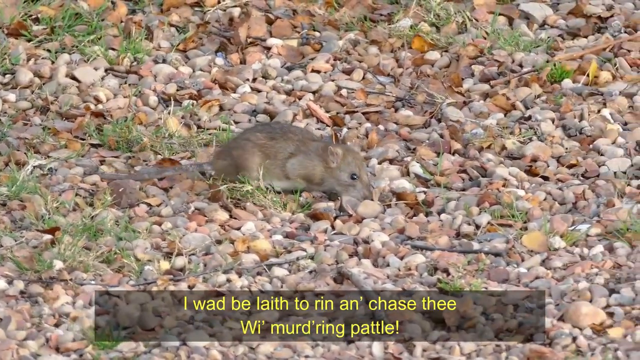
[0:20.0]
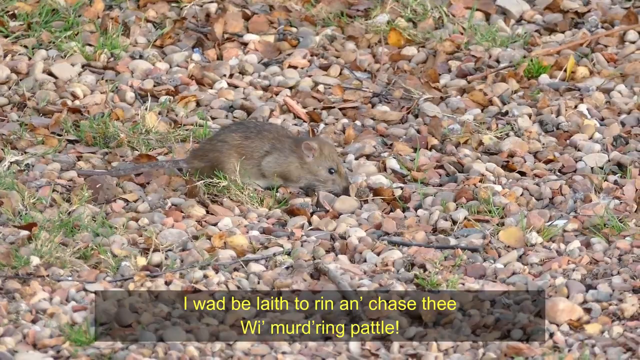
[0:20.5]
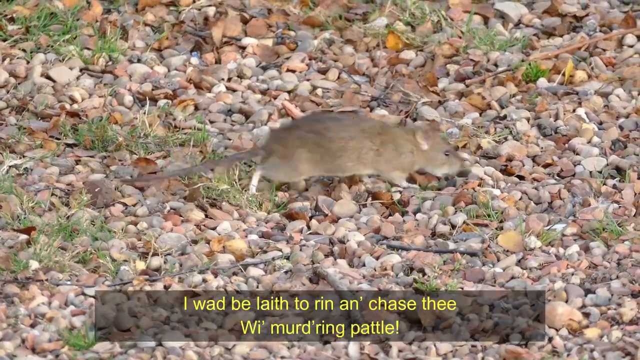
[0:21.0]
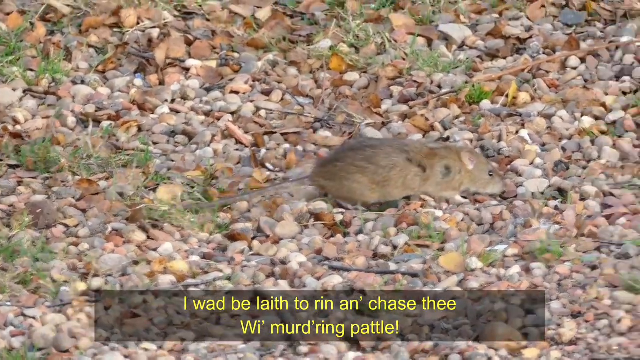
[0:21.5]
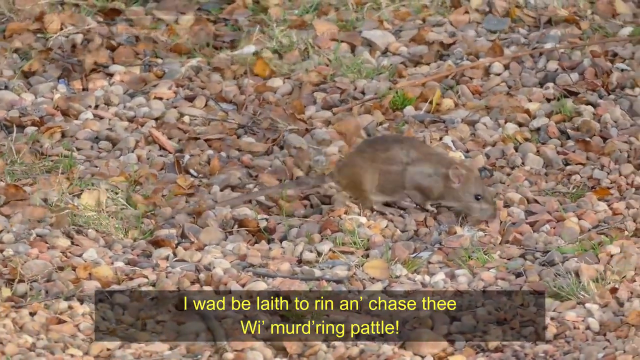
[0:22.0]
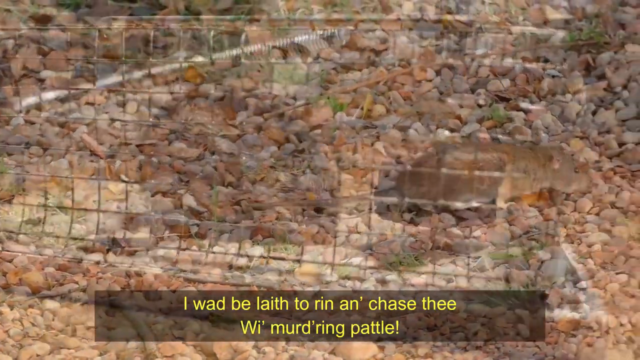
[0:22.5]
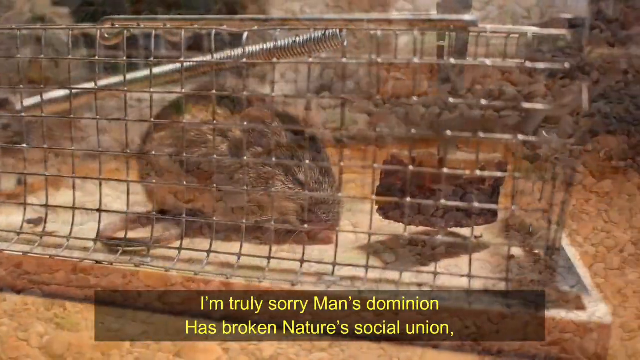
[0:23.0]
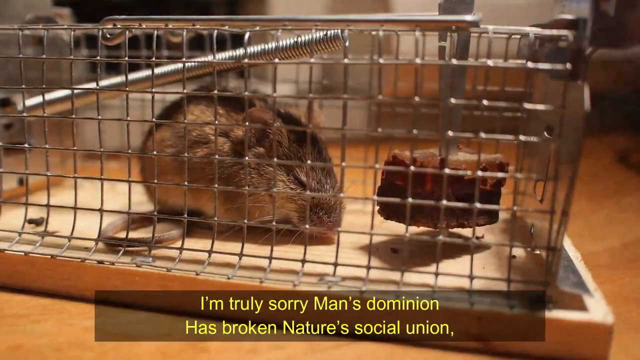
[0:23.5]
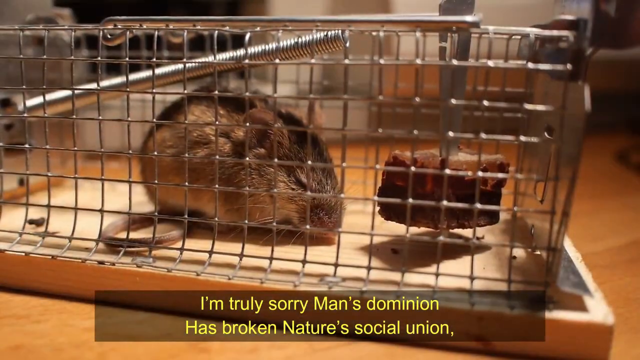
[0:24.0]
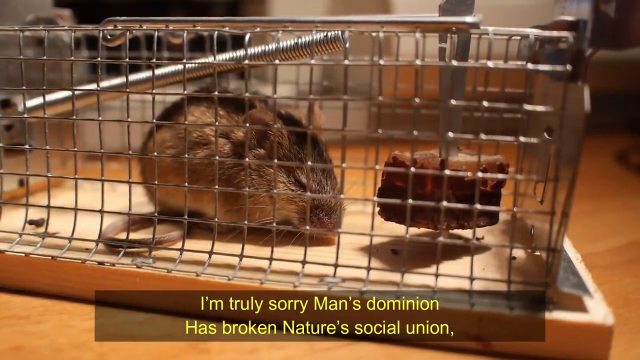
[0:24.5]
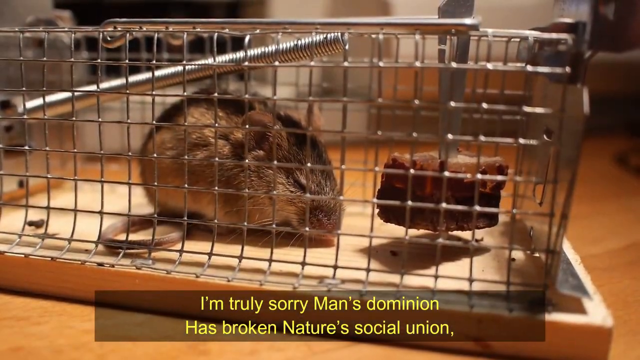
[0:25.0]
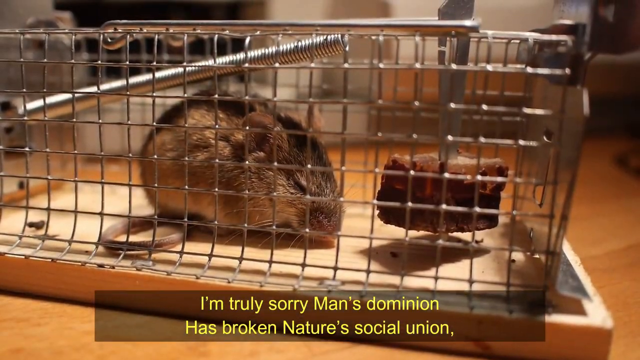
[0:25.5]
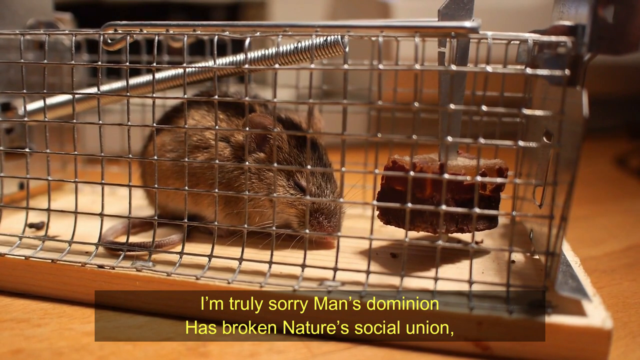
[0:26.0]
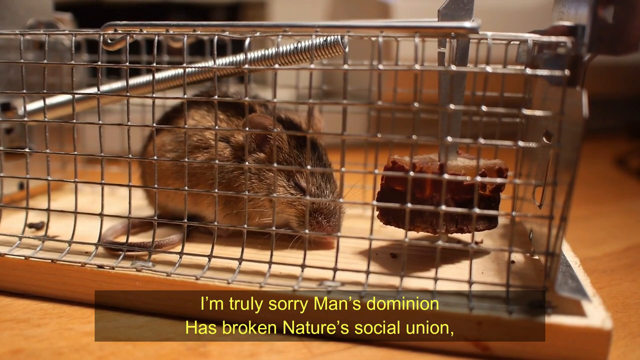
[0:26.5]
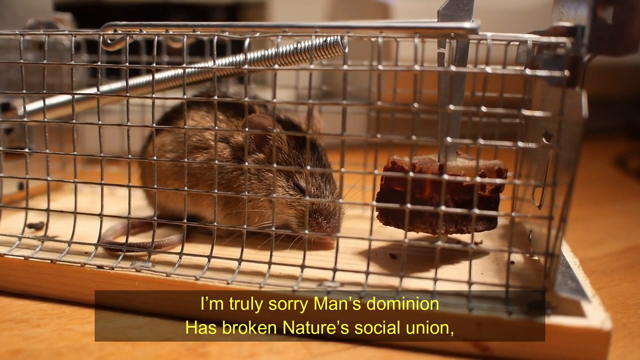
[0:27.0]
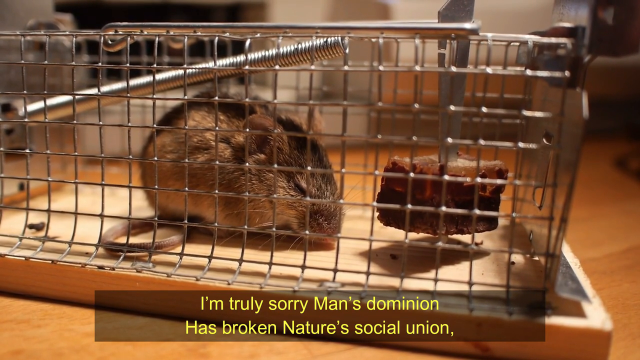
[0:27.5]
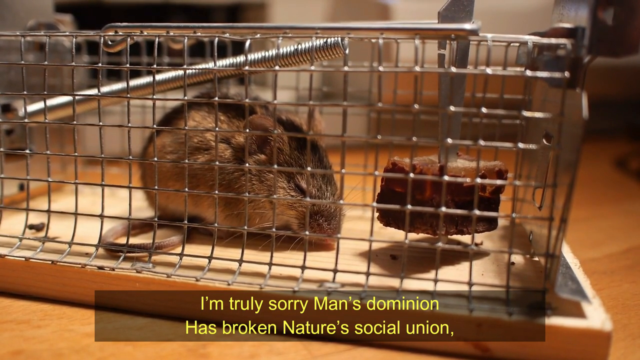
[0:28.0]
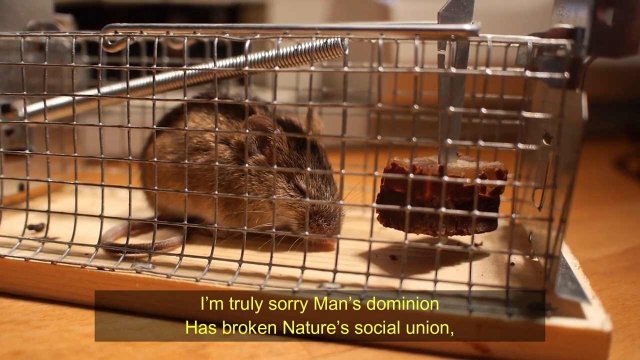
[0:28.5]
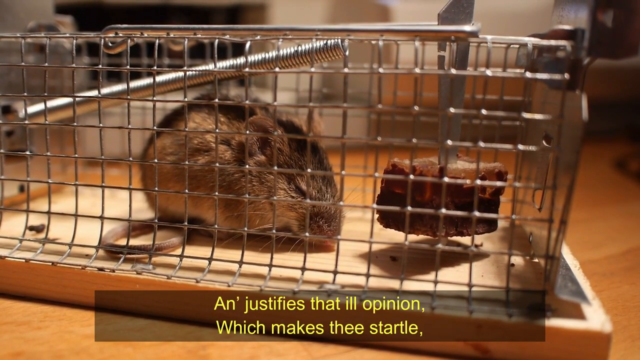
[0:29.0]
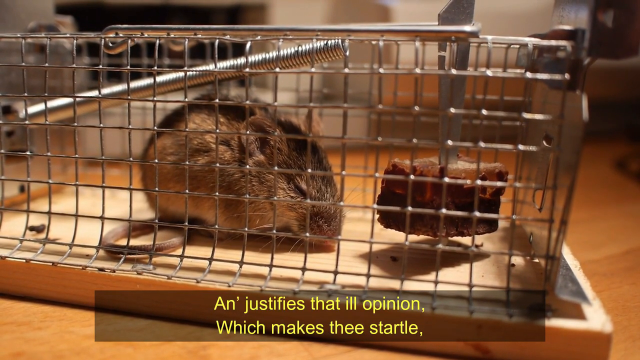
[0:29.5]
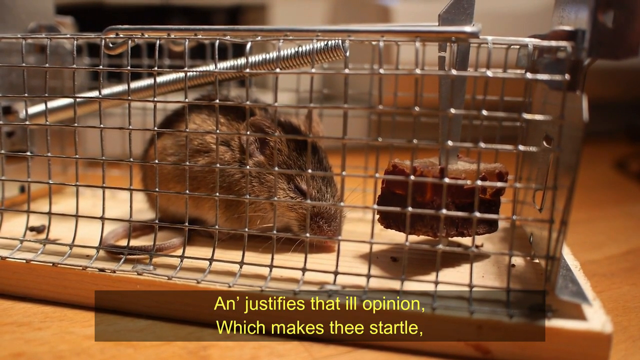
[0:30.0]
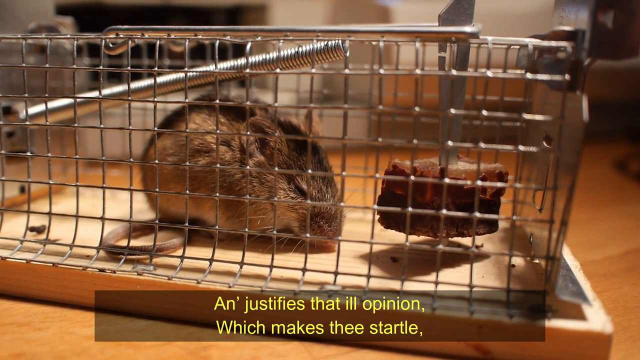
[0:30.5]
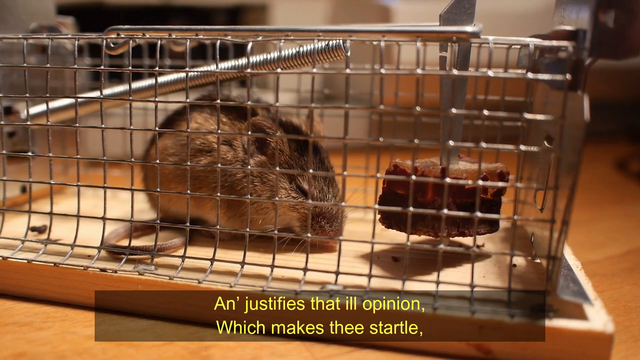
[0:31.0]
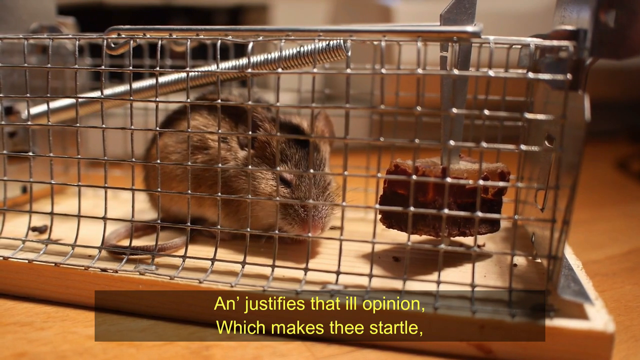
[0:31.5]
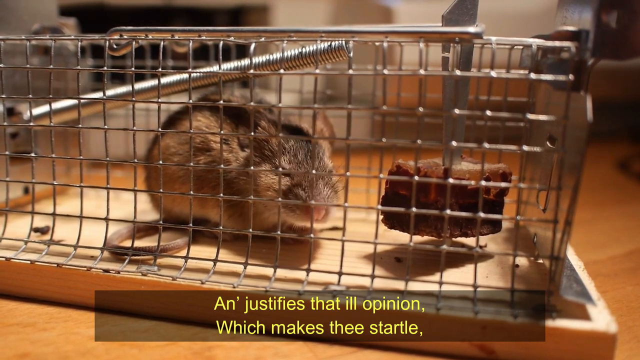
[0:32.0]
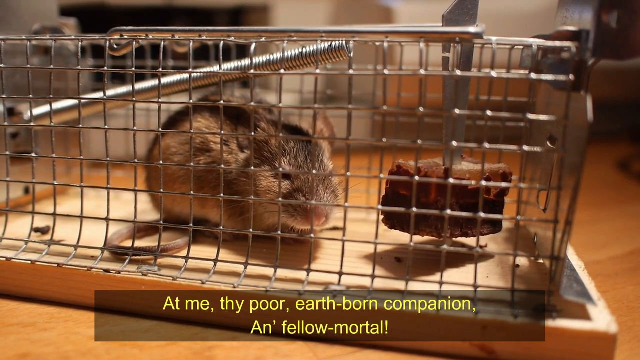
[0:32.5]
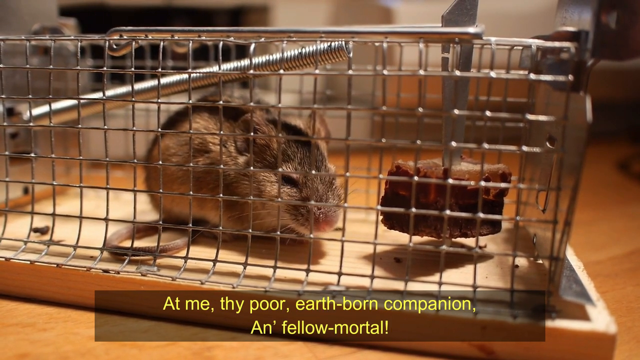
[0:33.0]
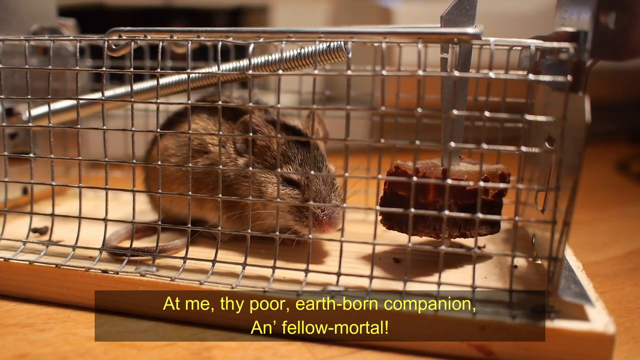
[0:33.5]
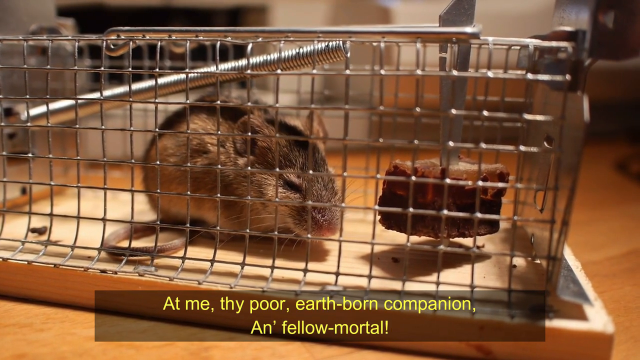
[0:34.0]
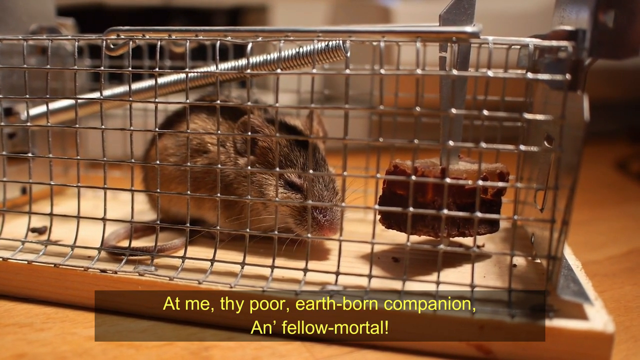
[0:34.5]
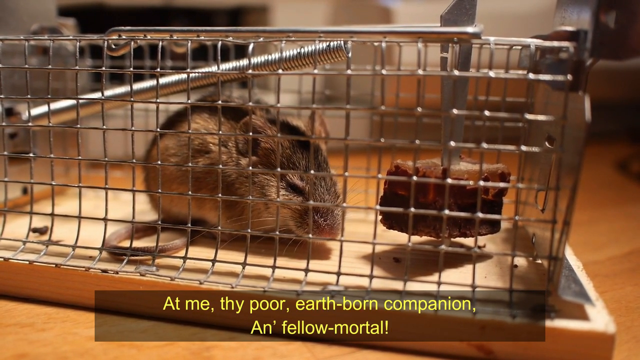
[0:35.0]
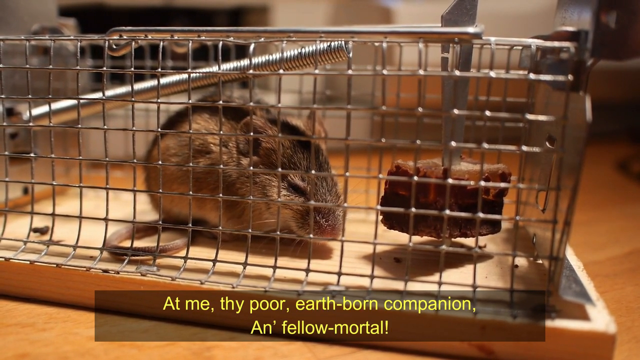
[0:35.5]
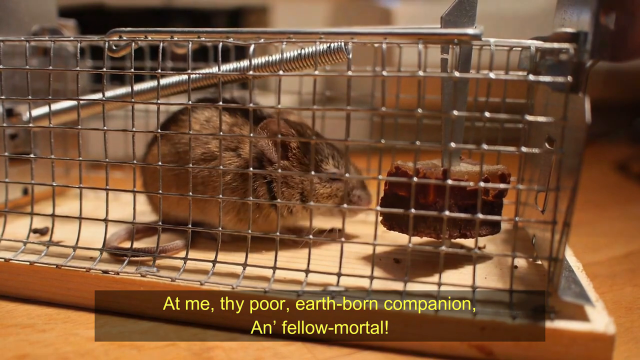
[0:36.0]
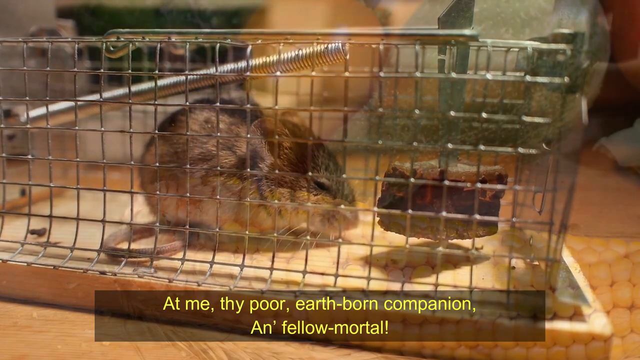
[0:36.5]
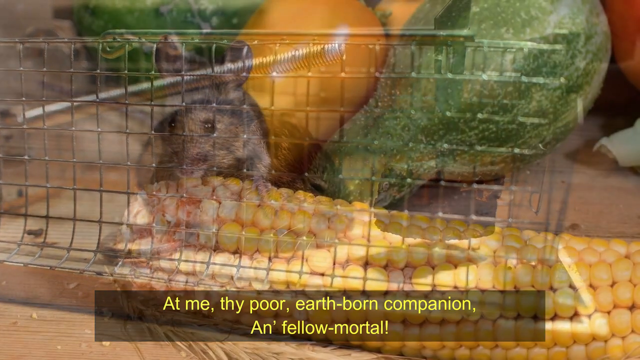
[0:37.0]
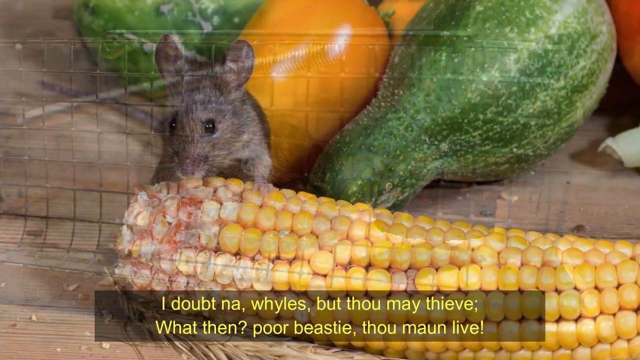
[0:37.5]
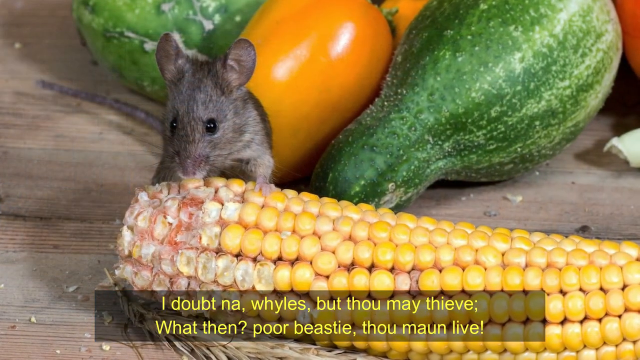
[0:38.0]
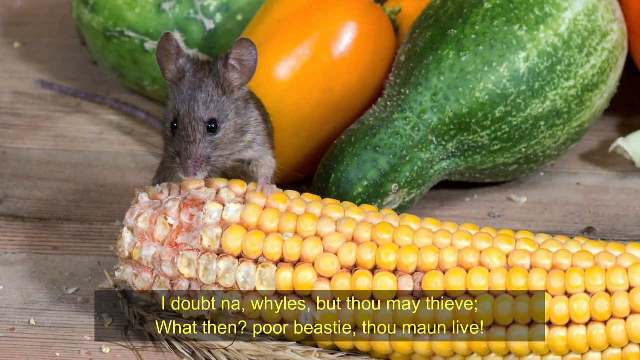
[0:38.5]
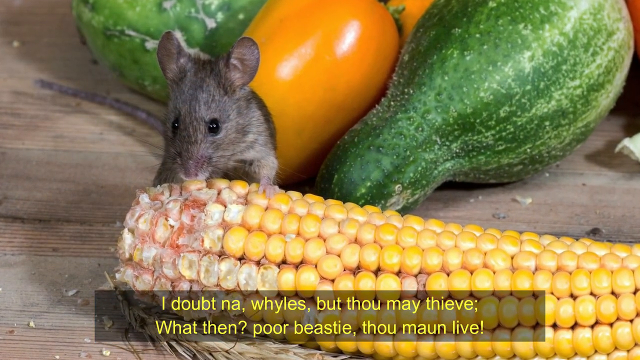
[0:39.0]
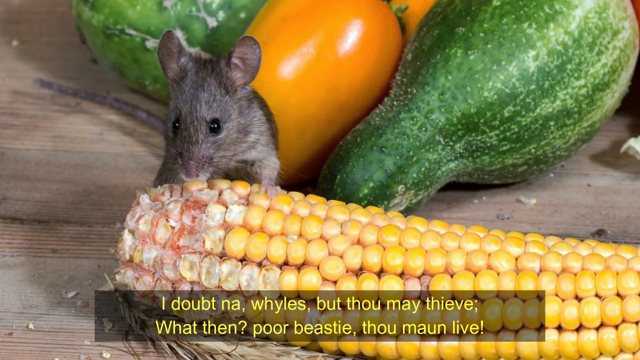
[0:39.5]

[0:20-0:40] The mouse continues exploring while the text at the bottom reads "I'm truly sorry, man's dominion has broken nature's social union, an' justifies that ill opinion which makes thee startle at me thy poor earth-born companion an' fellow mortal!" followed by "I doubt na whyles, but thou may thieve. What then, poor beastie, thou maun live?" The video goes from a mouse in a trap with its eyes closed, with some kind of little treat inside to lure it in, to an image of a little field mouse on a table with cucumbers or gourds, zucchinis and other vegetables in the background and corn up front. The mouse looks like it is eating the corn cob, which has had its husk removed.